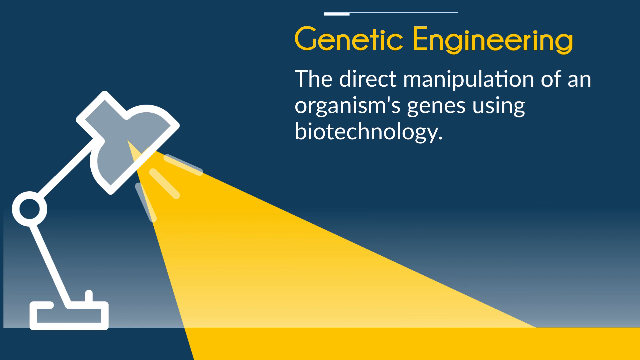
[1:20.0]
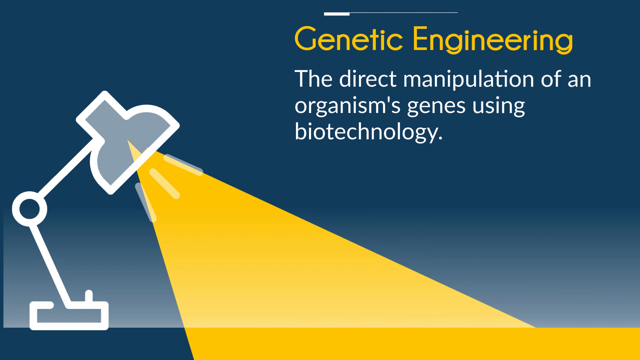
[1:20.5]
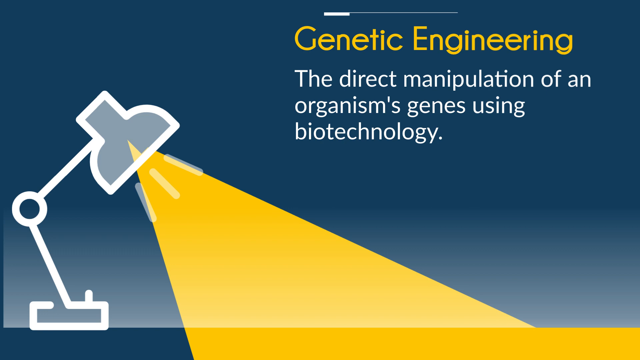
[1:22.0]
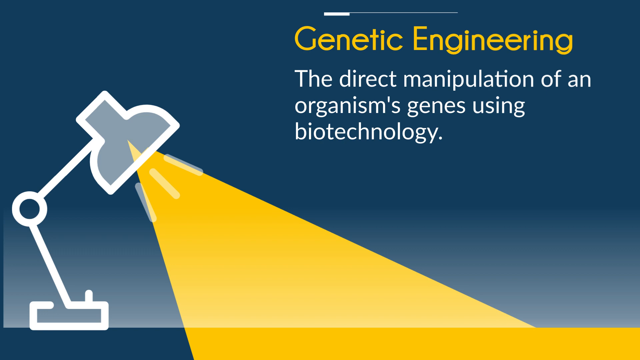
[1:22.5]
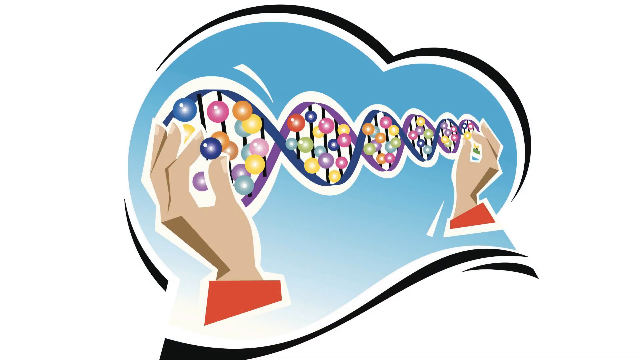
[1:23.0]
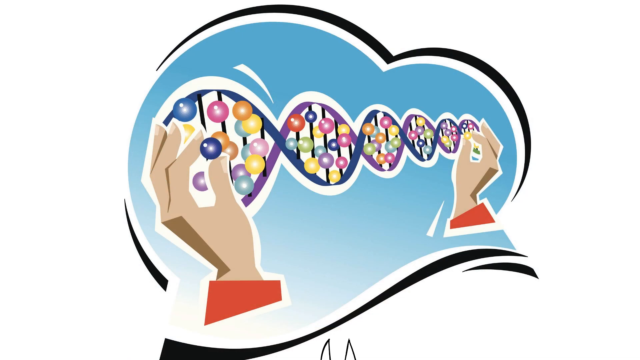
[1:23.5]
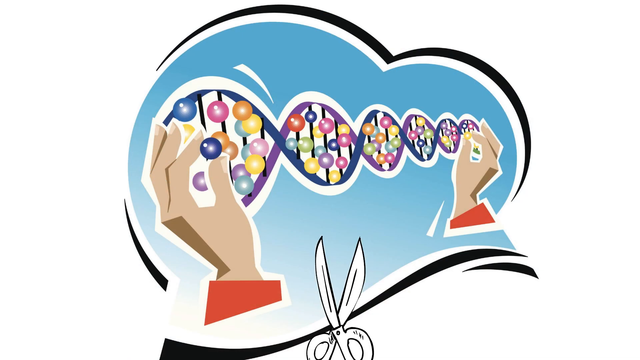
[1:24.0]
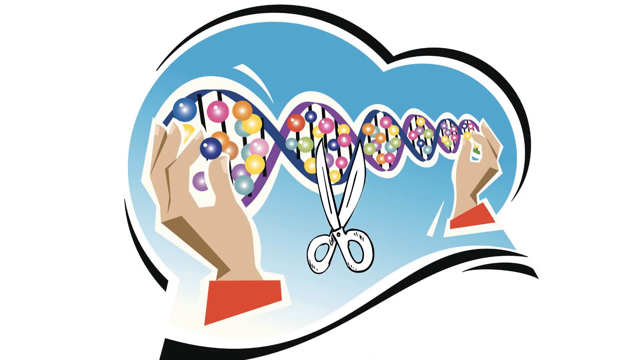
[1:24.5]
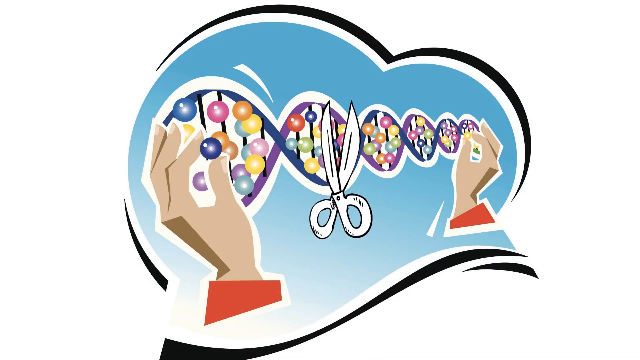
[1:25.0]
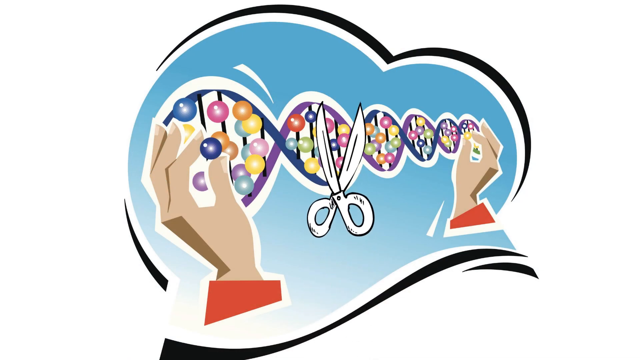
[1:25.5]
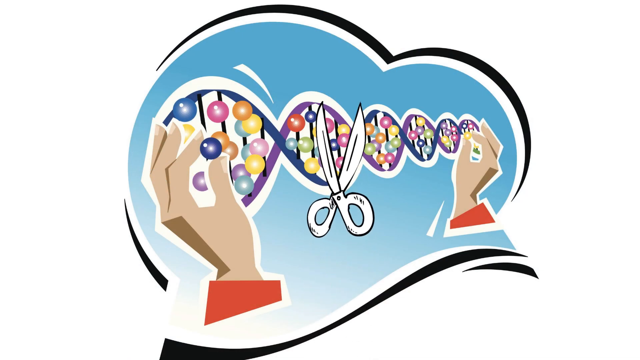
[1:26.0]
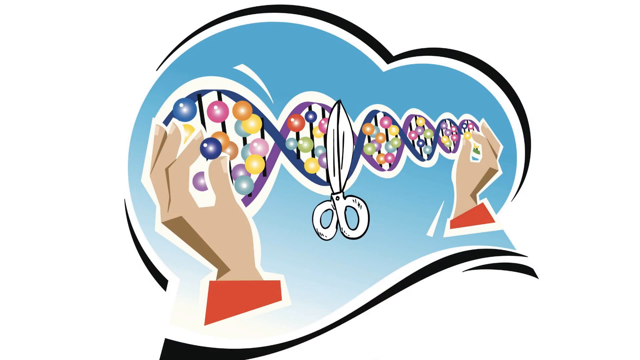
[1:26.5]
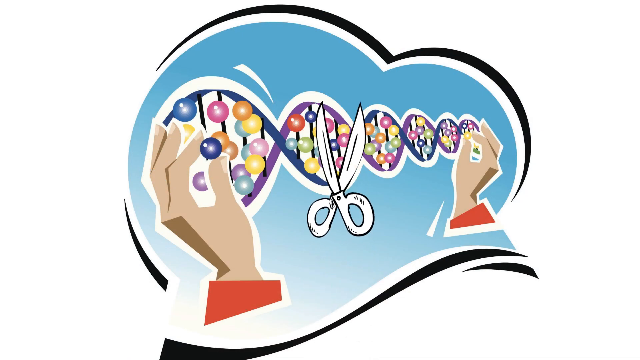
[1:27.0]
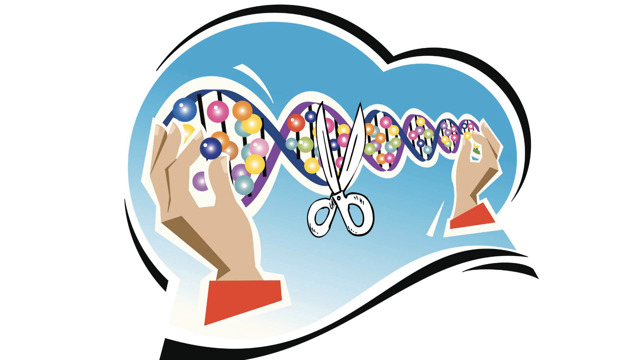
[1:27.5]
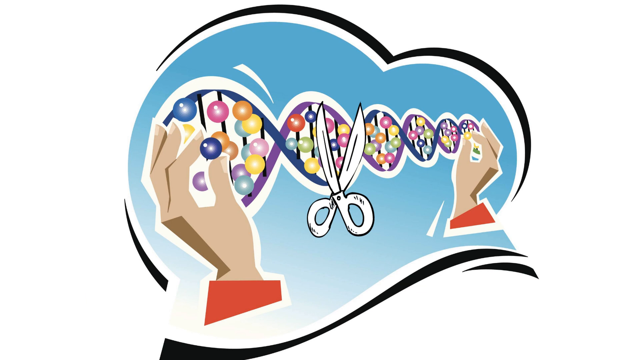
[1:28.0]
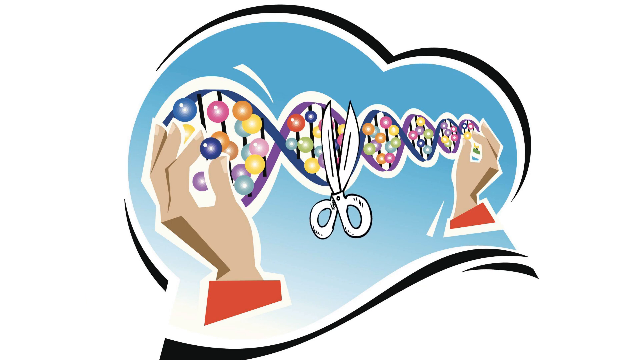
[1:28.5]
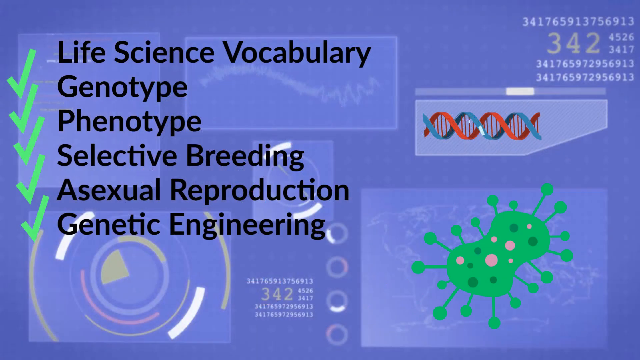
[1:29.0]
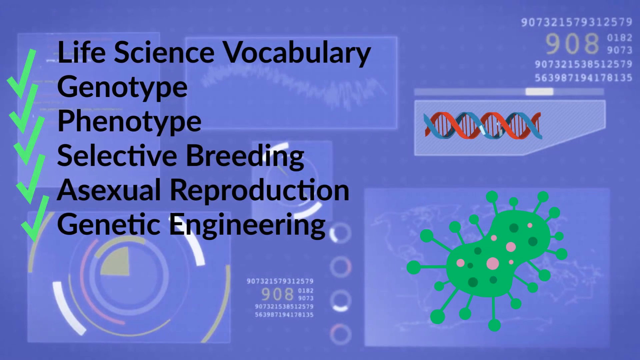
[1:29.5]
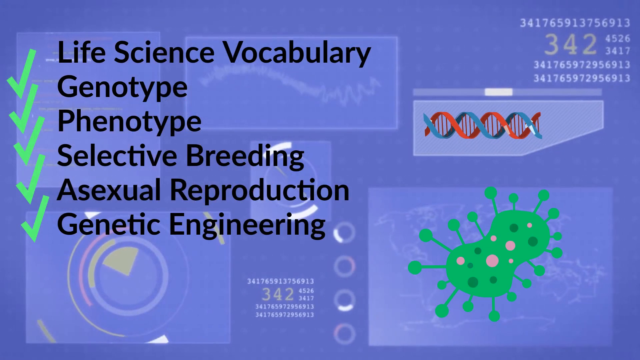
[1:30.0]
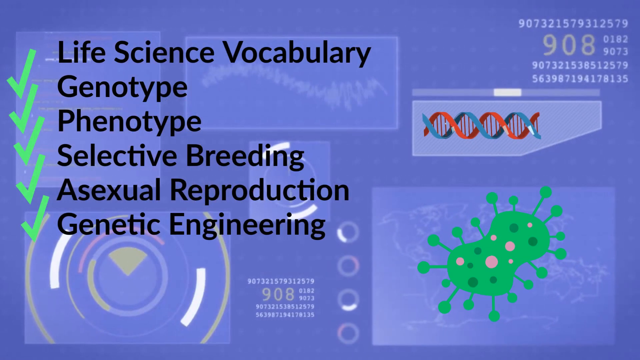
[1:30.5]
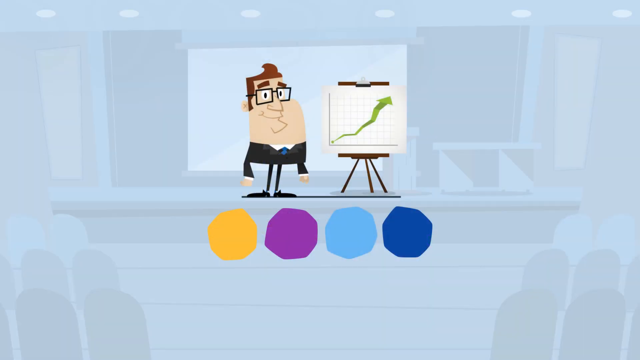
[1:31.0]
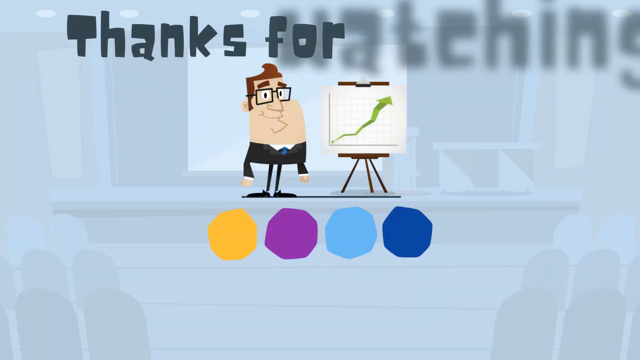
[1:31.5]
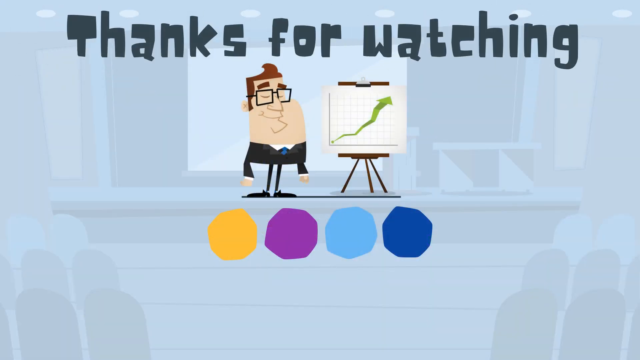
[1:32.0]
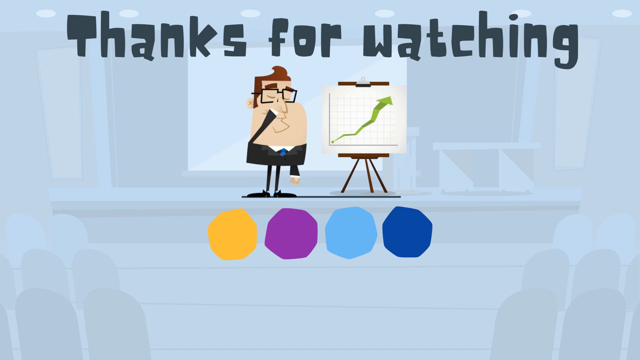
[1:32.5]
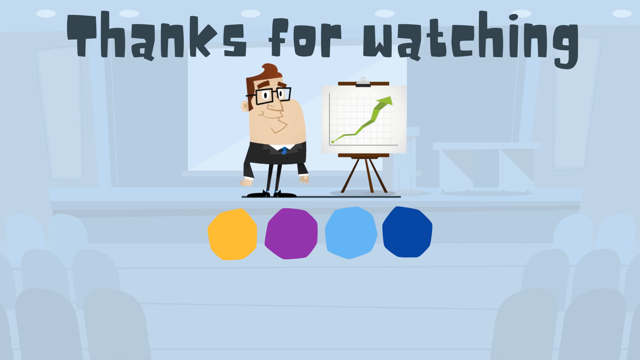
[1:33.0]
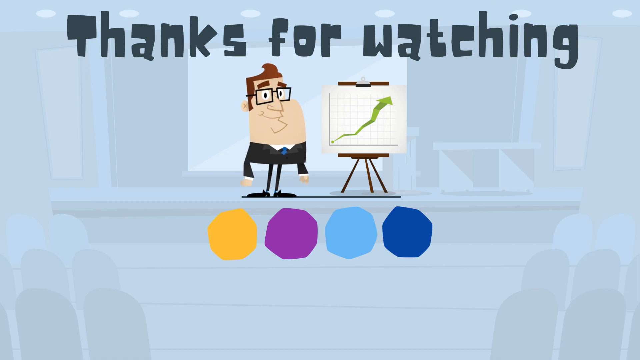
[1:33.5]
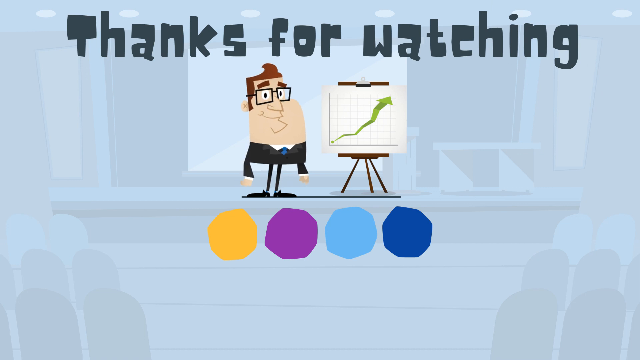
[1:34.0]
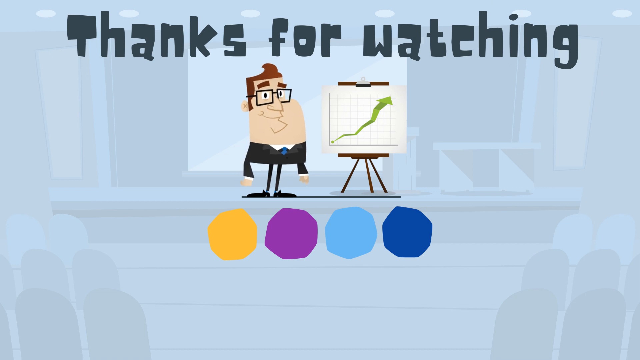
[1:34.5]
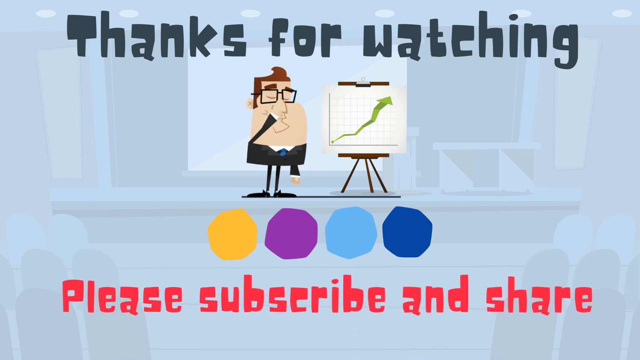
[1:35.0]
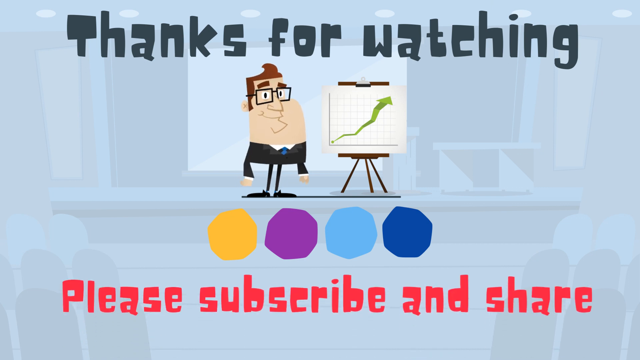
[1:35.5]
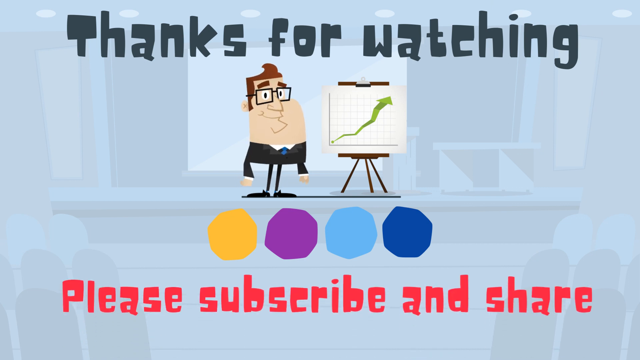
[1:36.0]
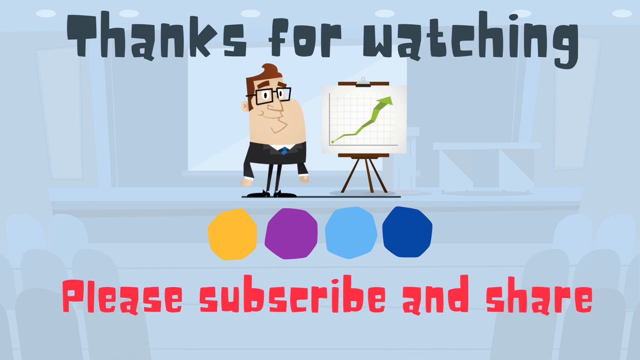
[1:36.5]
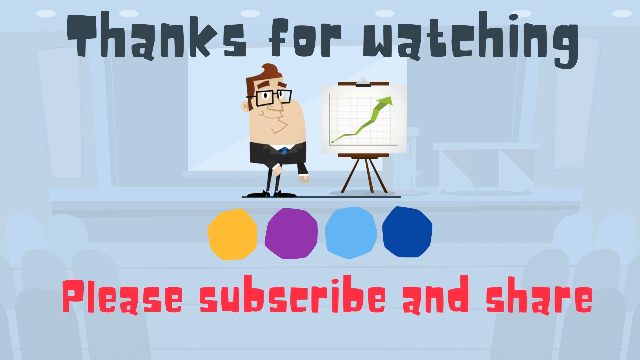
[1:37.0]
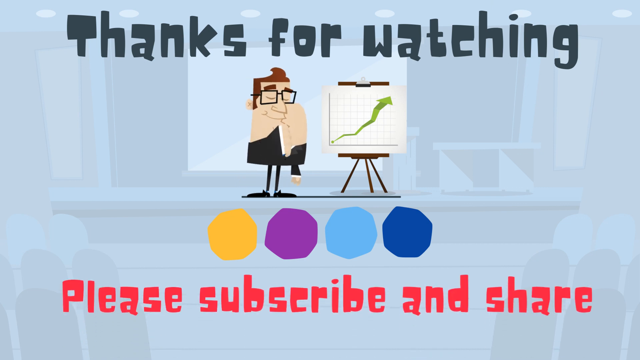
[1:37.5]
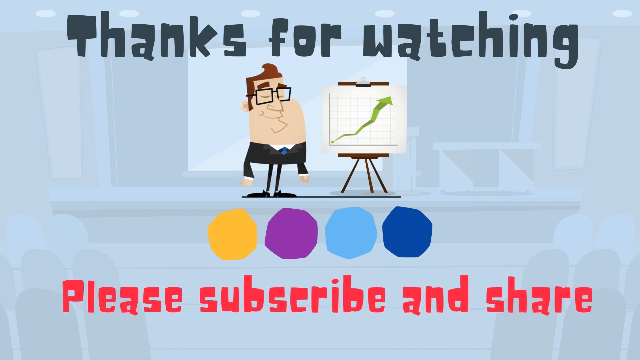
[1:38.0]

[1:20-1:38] The last term is genetic engineering, defined as the direct manipulation of an organism's genes using biotechnology. A DNA strand is shown and someone is cutting the DNA.